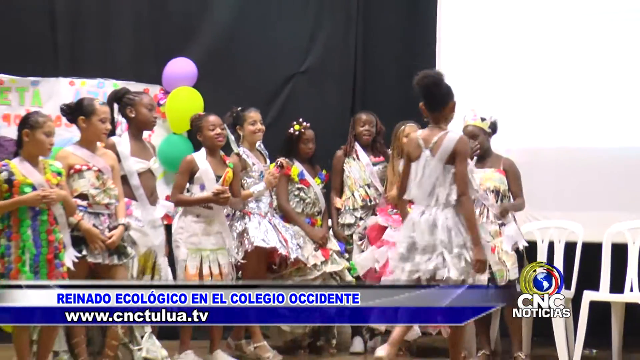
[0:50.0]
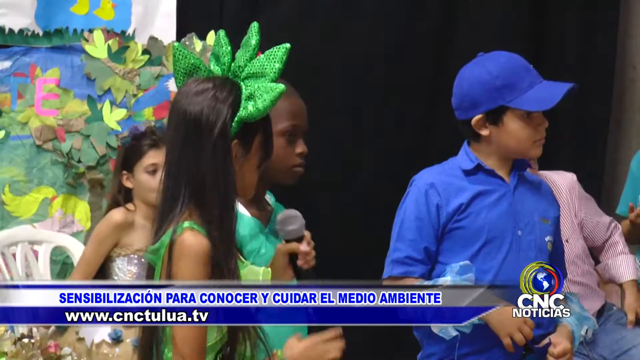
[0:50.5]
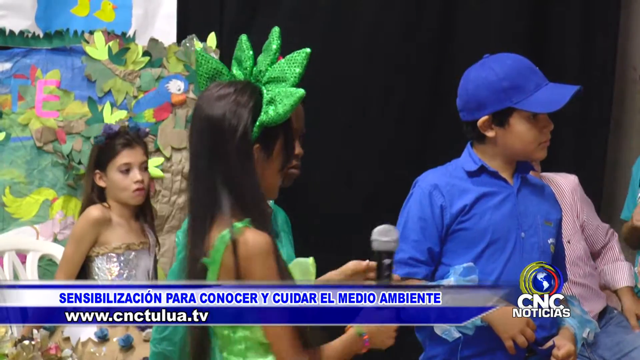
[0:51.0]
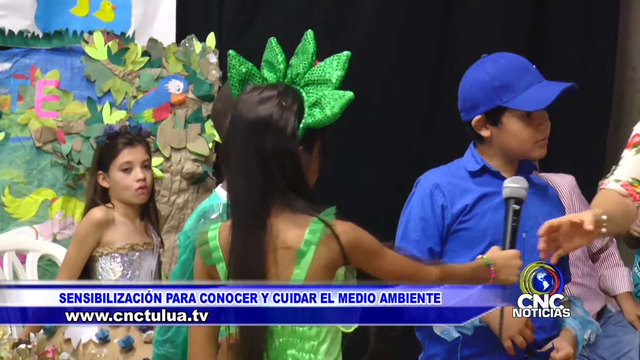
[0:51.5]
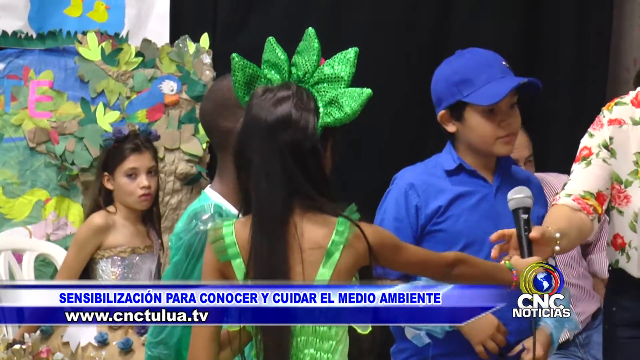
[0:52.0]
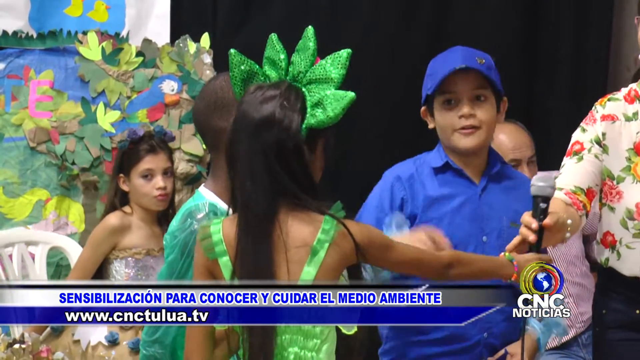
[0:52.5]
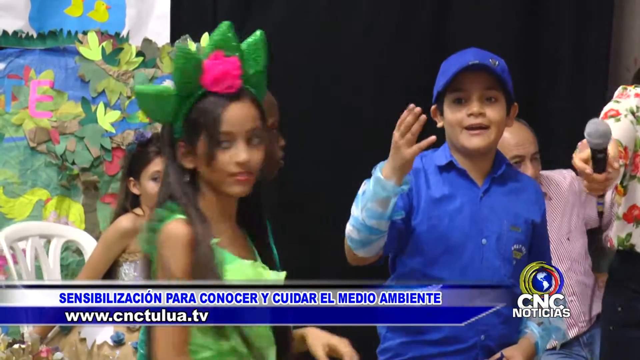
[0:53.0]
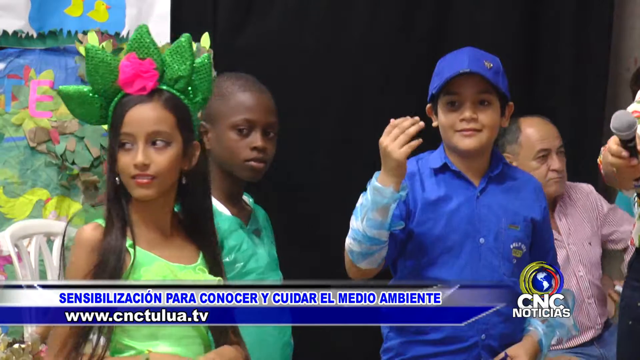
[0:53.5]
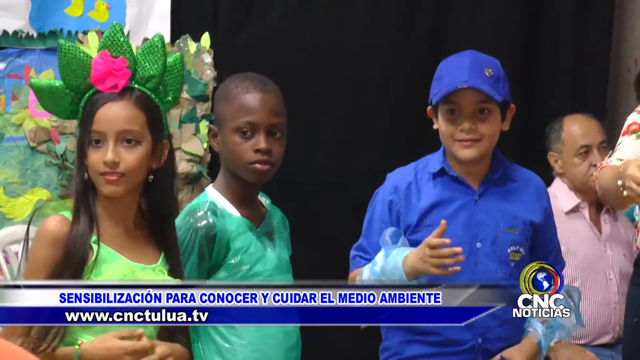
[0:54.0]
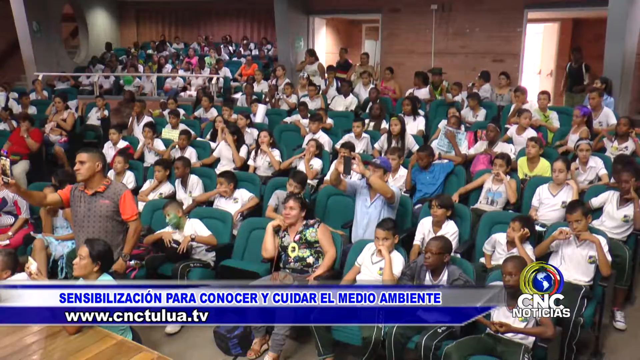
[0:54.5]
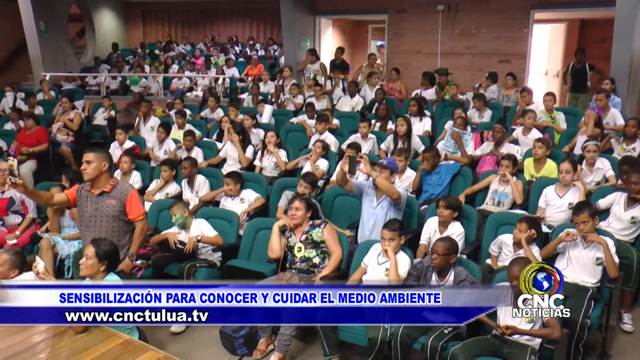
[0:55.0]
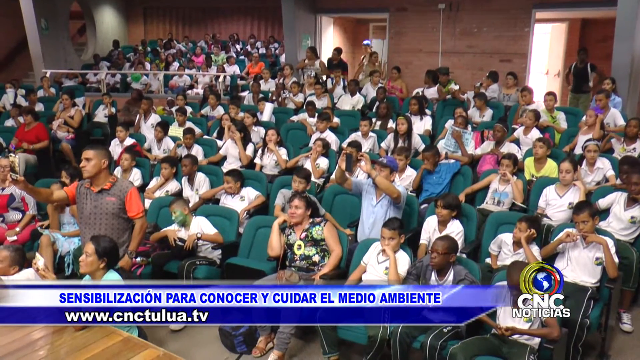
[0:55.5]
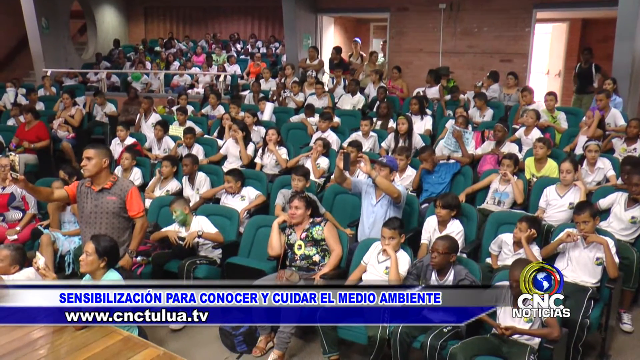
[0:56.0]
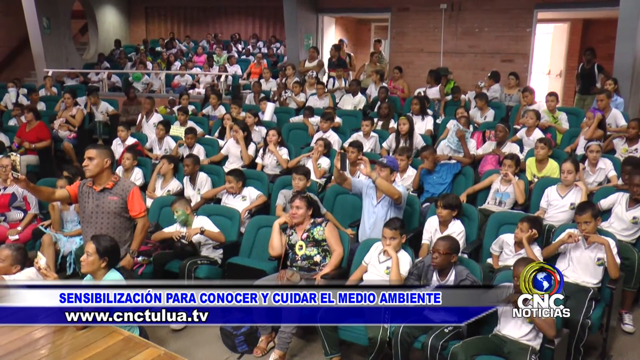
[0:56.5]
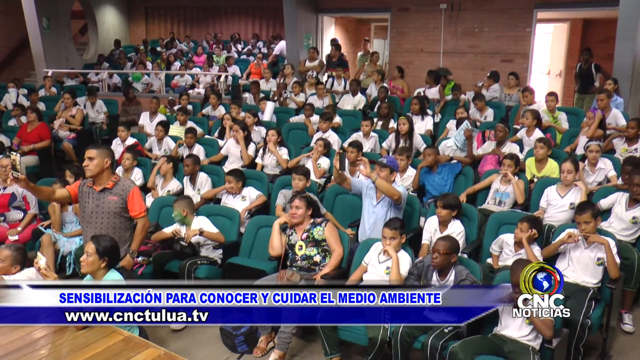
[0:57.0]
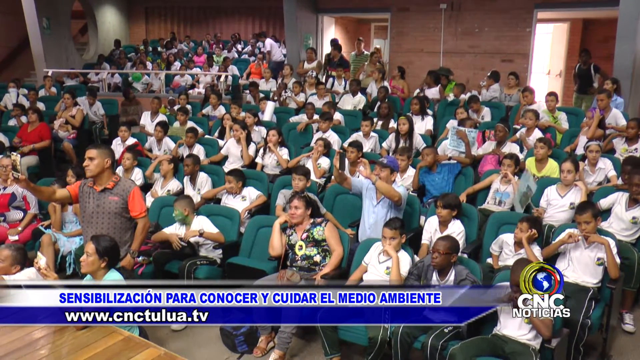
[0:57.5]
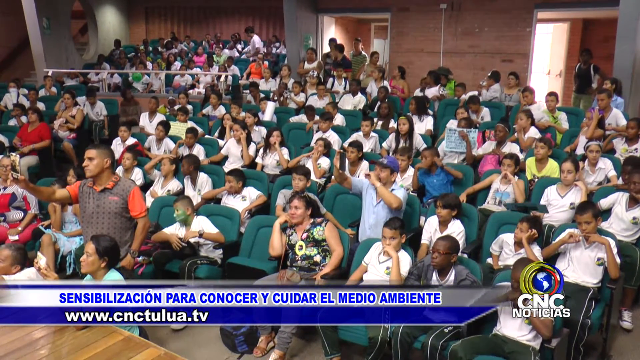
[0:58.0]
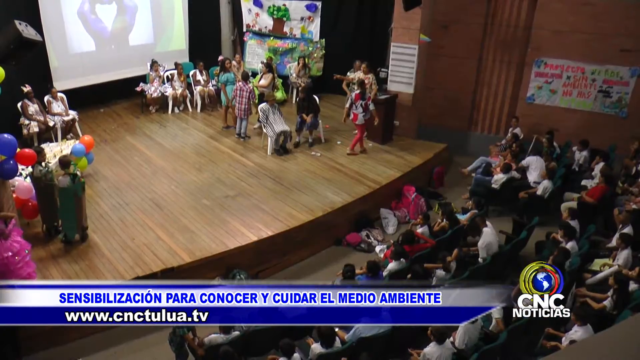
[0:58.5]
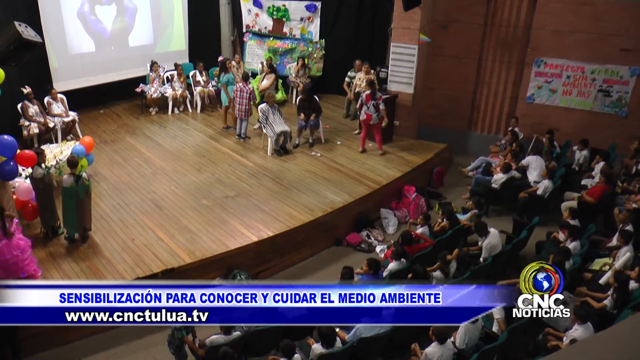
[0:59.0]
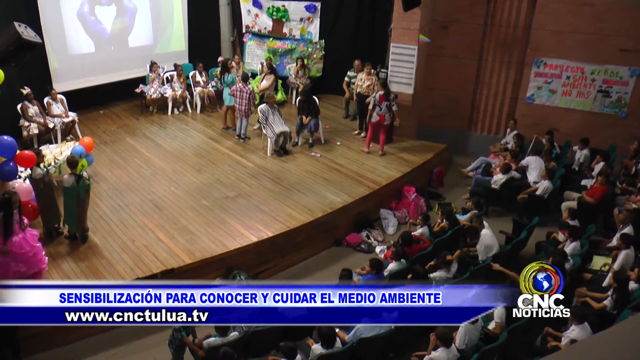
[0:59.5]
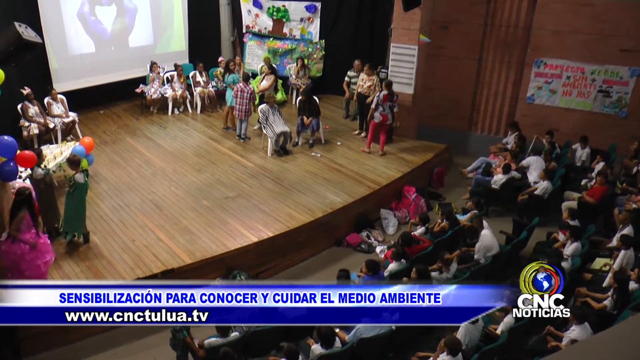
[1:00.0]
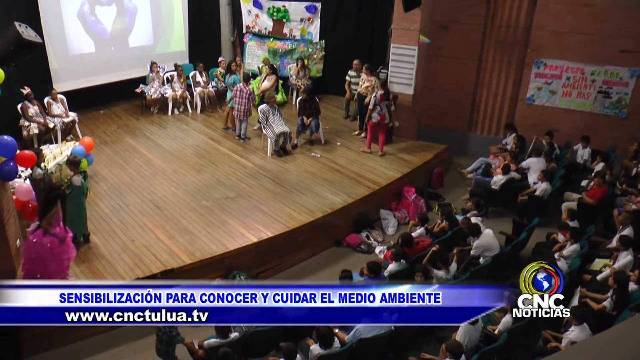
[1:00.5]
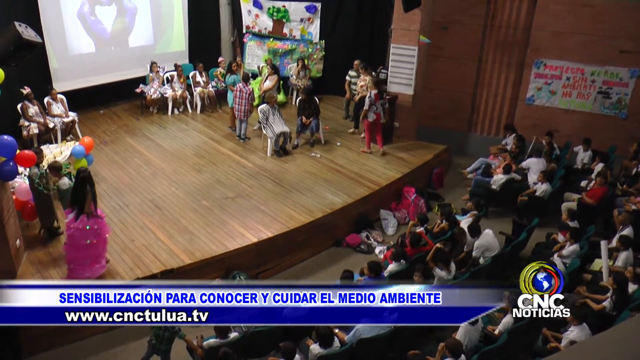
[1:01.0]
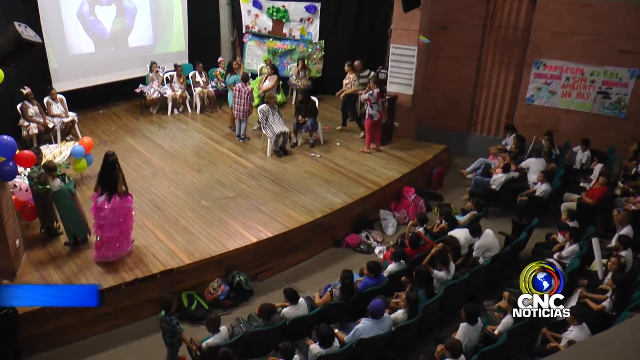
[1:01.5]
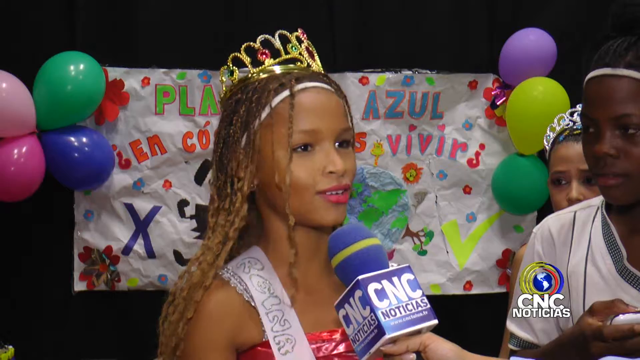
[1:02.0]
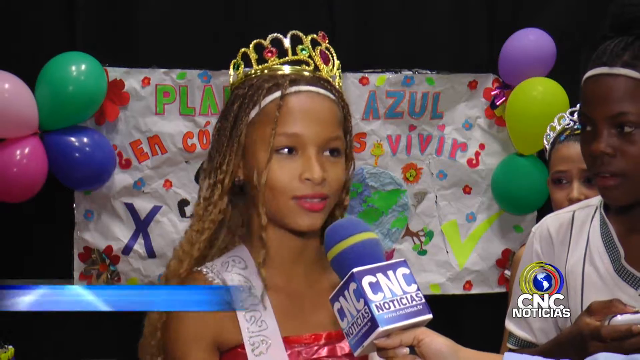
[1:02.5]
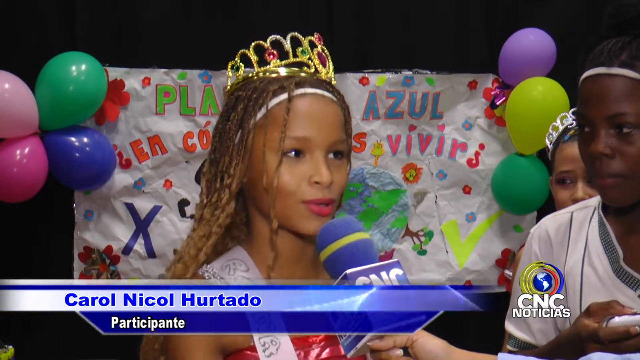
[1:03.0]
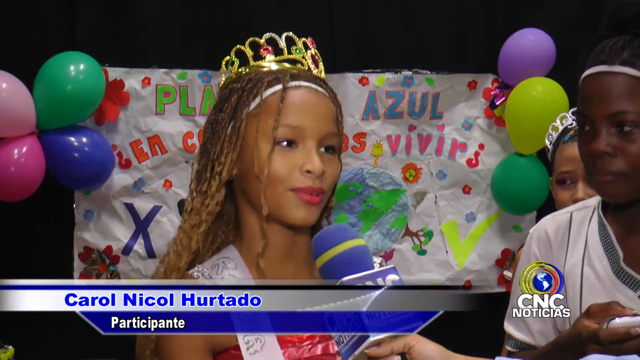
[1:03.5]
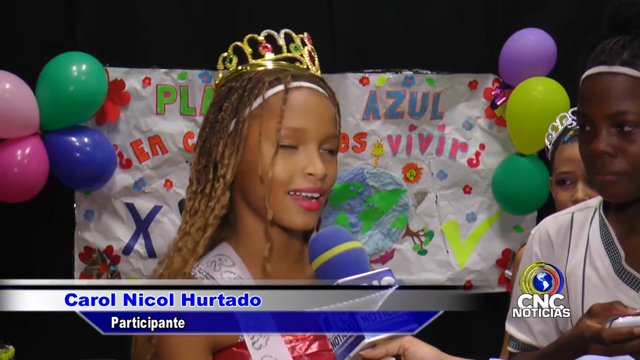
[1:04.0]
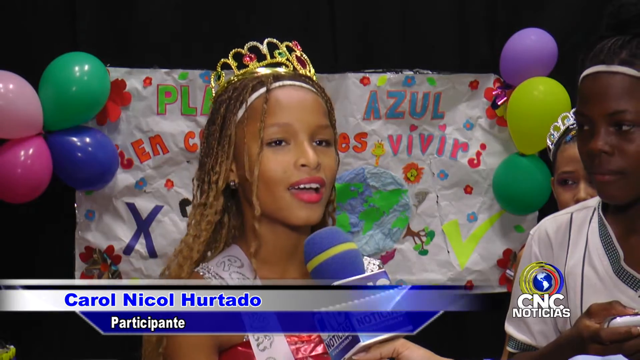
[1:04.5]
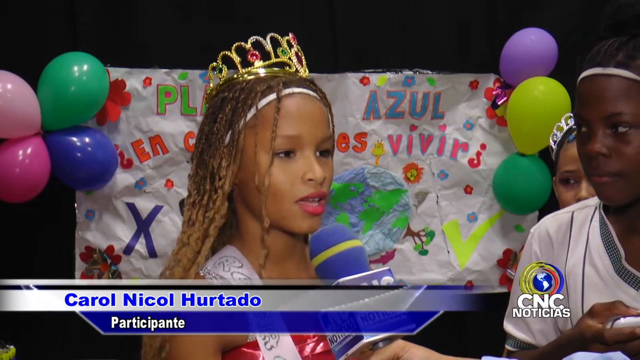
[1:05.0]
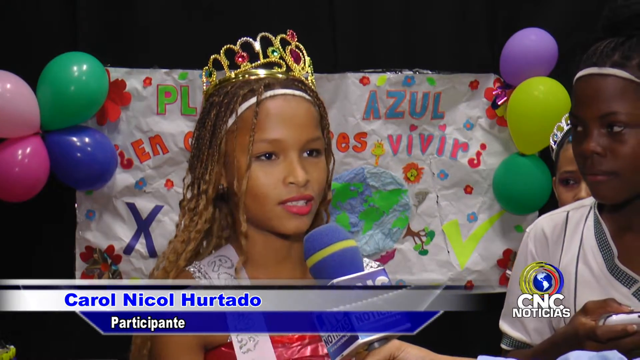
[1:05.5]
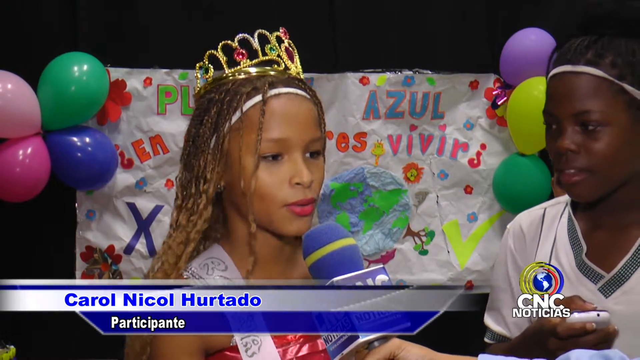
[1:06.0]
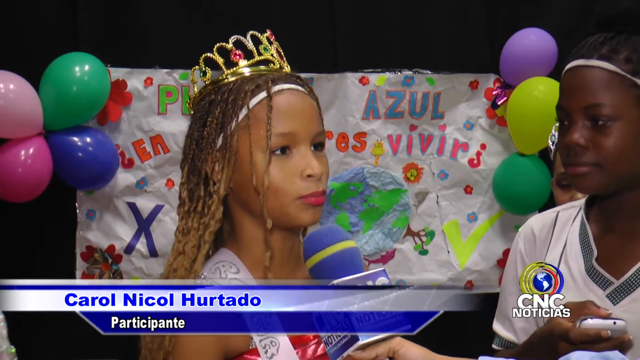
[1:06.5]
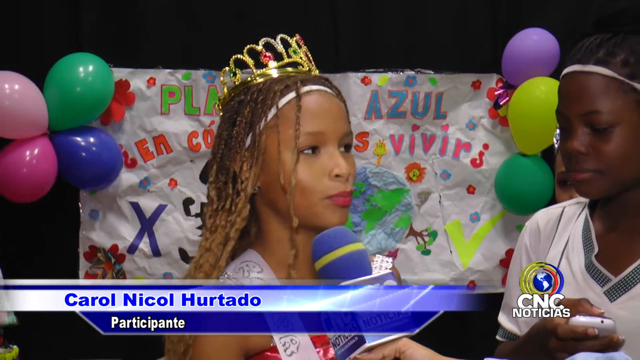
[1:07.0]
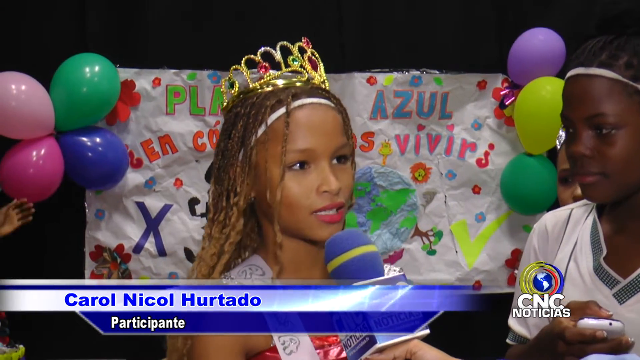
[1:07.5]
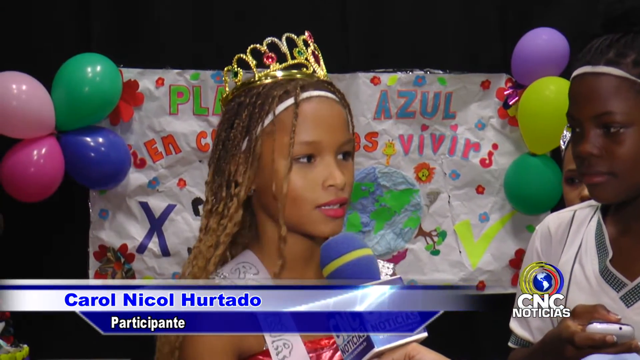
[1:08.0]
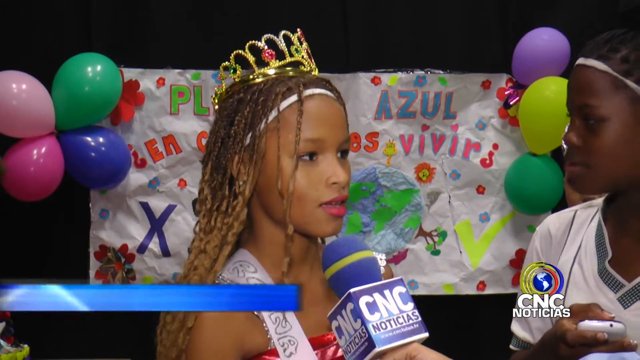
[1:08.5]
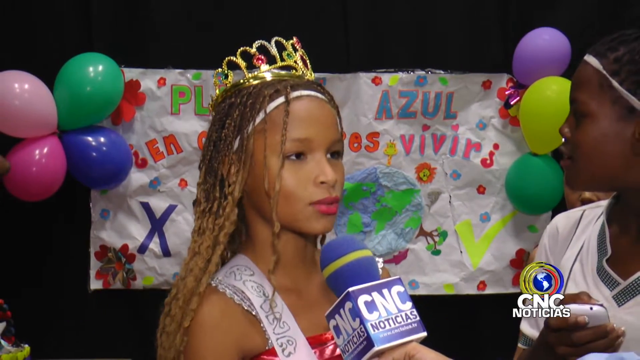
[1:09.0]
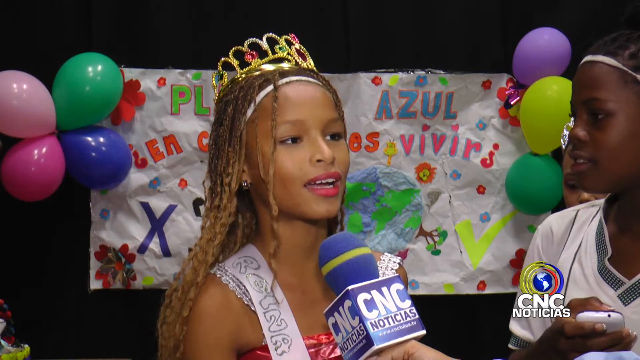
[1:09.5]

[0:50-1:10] The CNC Noticias broadcast continues with "las noticias que usted quiere ver lunes a viernes" and a title or subtitle reading "Reynado y Colegio en el Colegio Occidente". Only African American girl students are on the stage, in a Hispanic-influenced event that is almost like a Mardi Gras mixed with themes of ecology and caring for nature, animals and plants. Their outfits appear to reflect this: one girl wears green all over, like a nature-type being. What they wear is kind of like a Hispanic festivity focused on nature and ecology, and the event has somewhat of a narrative.